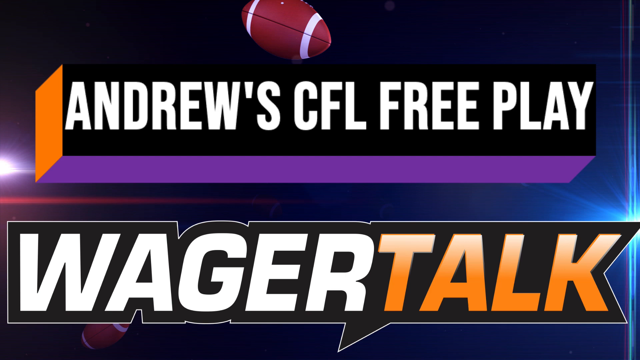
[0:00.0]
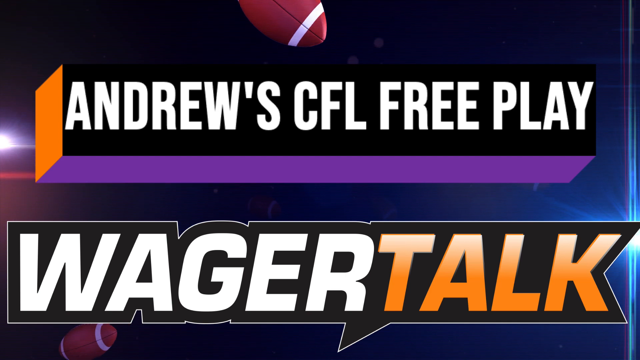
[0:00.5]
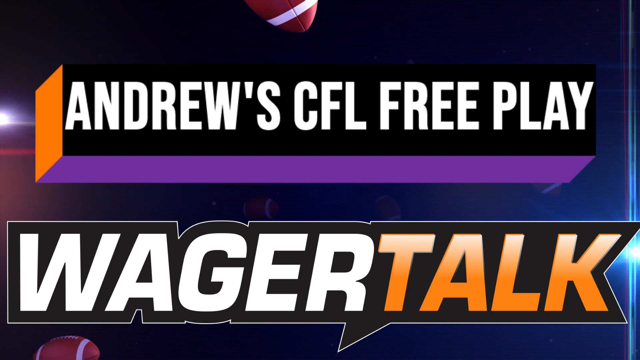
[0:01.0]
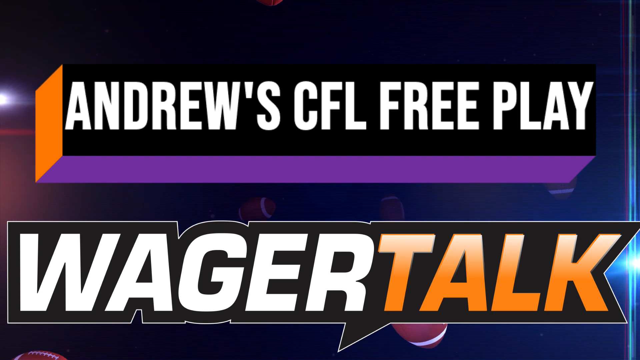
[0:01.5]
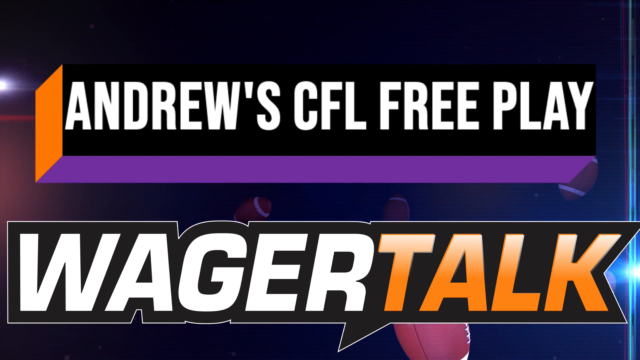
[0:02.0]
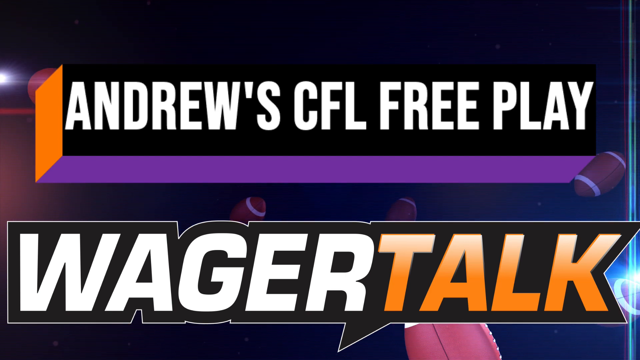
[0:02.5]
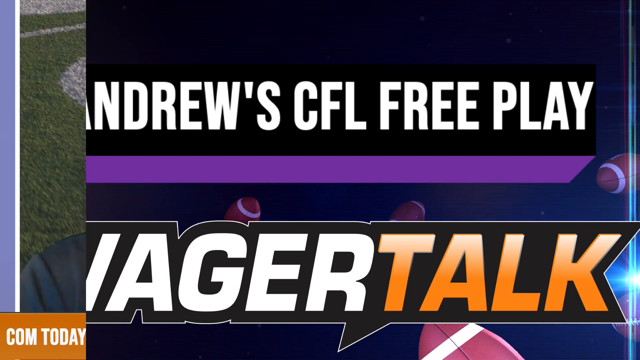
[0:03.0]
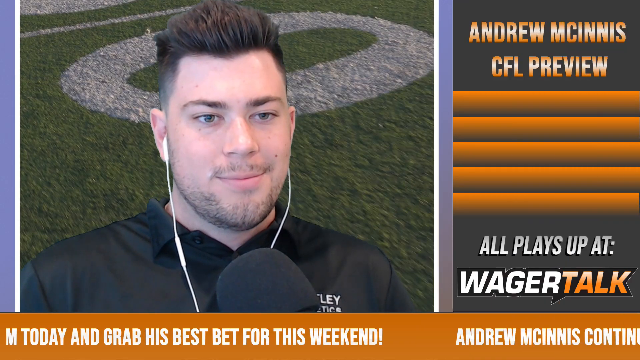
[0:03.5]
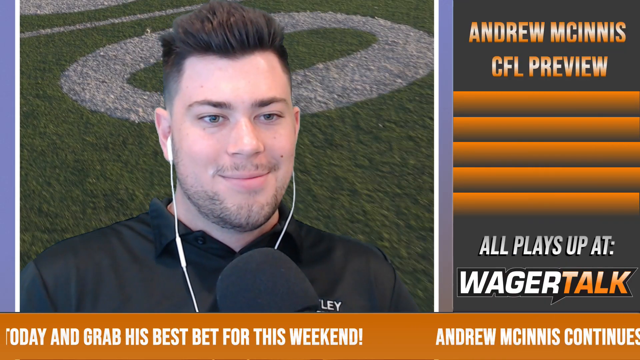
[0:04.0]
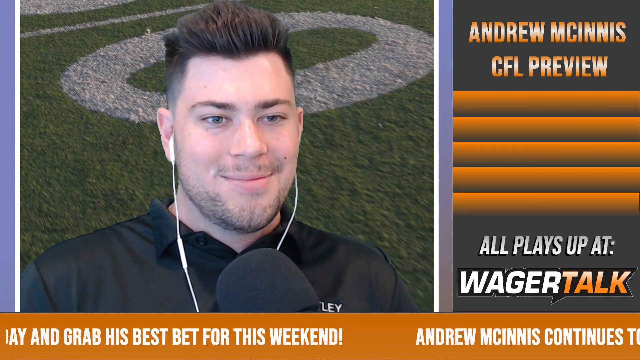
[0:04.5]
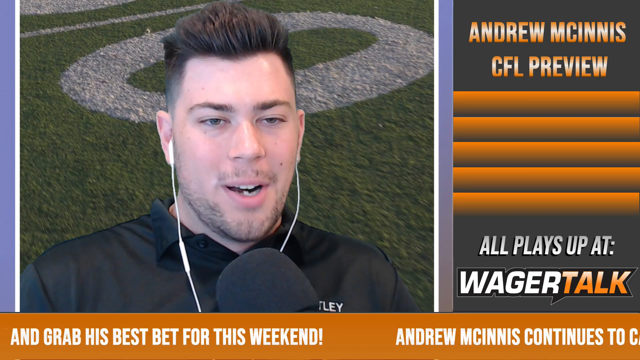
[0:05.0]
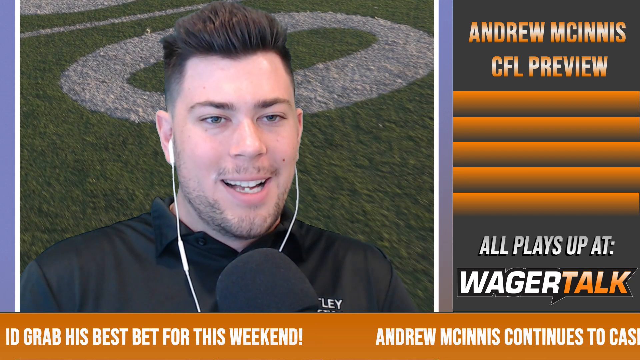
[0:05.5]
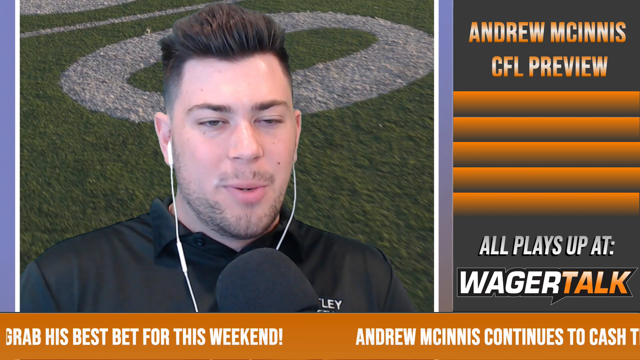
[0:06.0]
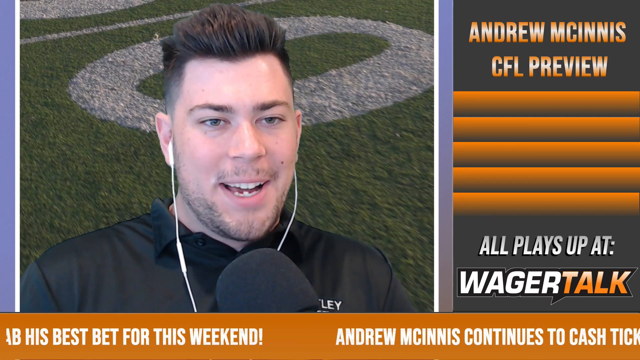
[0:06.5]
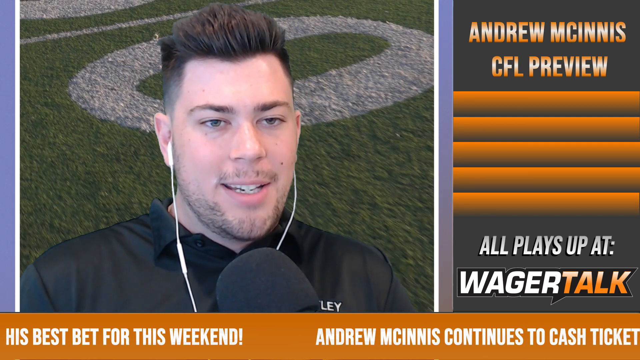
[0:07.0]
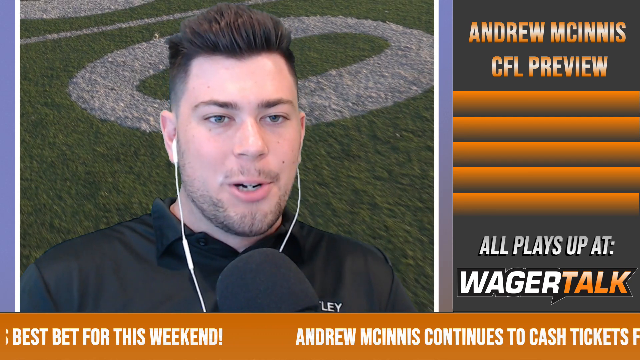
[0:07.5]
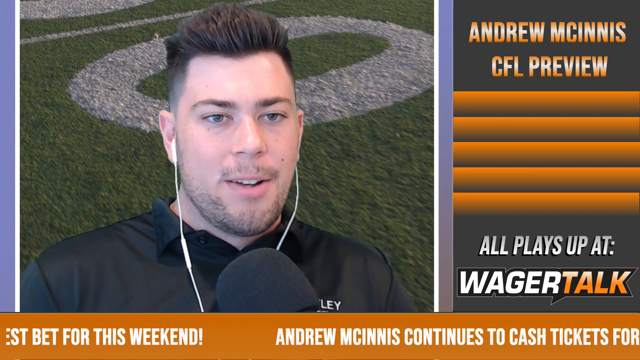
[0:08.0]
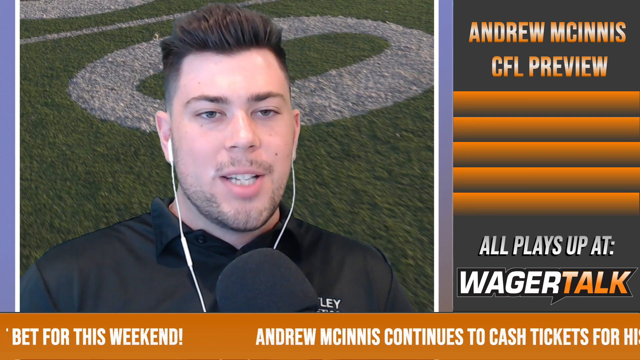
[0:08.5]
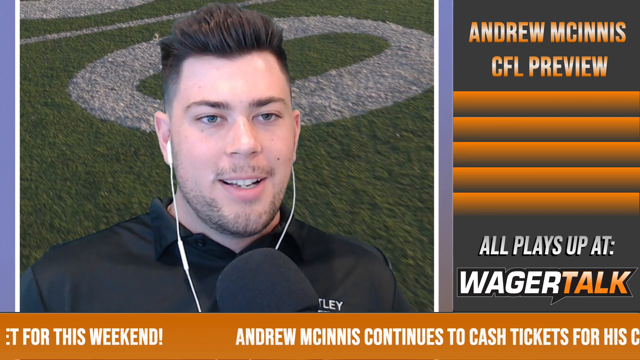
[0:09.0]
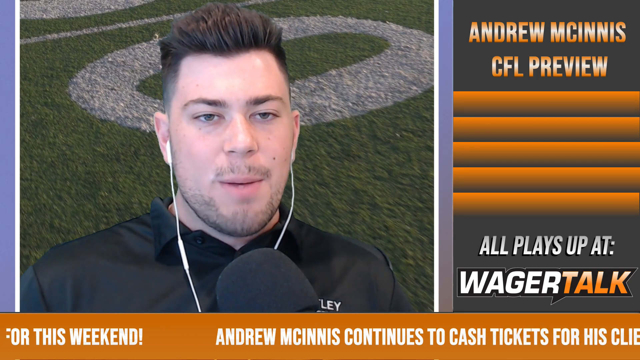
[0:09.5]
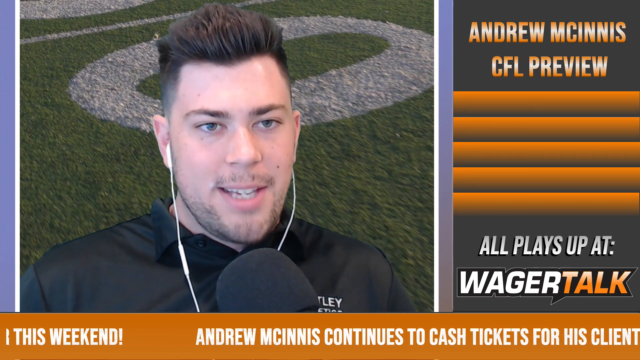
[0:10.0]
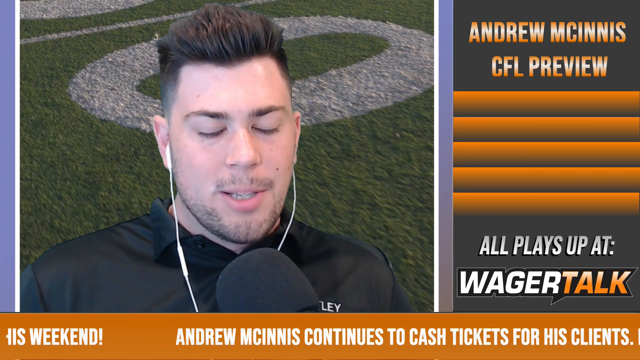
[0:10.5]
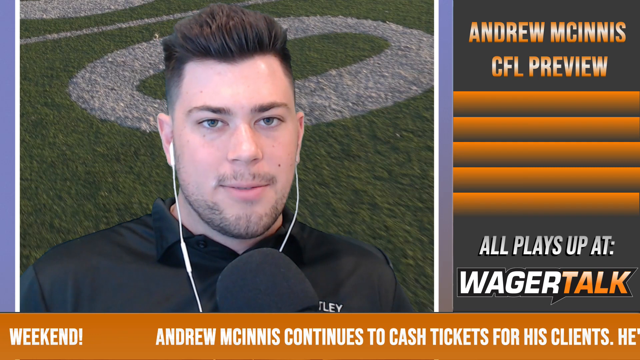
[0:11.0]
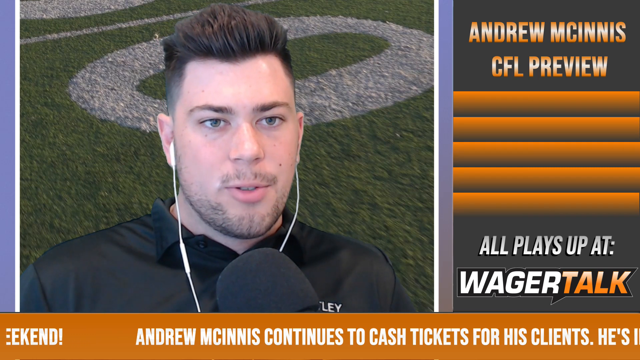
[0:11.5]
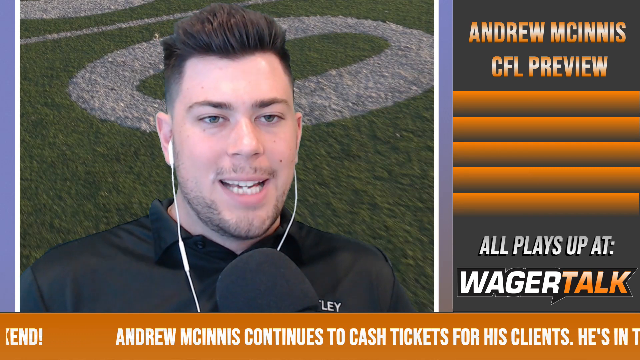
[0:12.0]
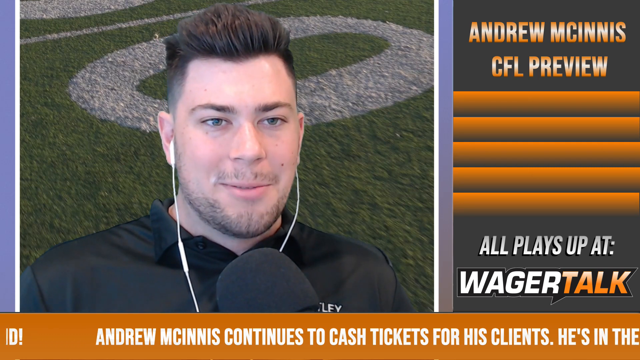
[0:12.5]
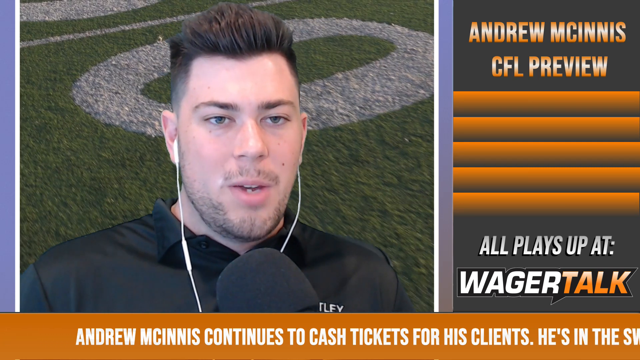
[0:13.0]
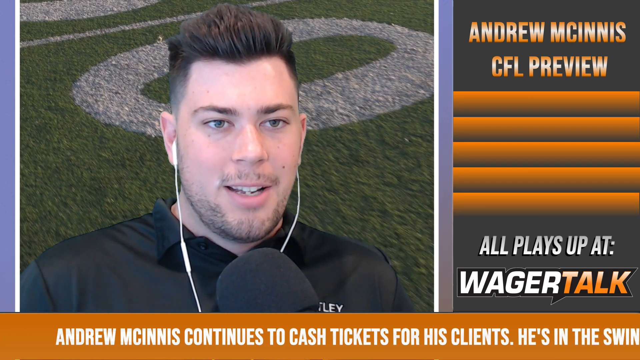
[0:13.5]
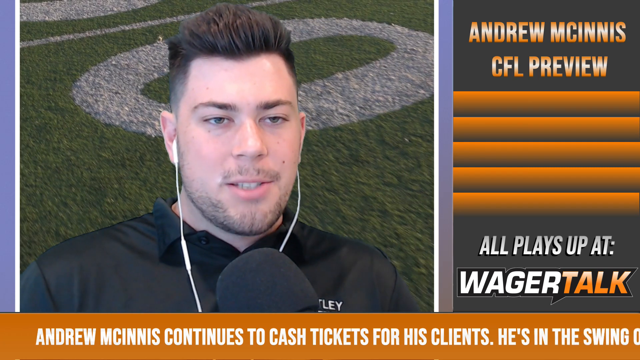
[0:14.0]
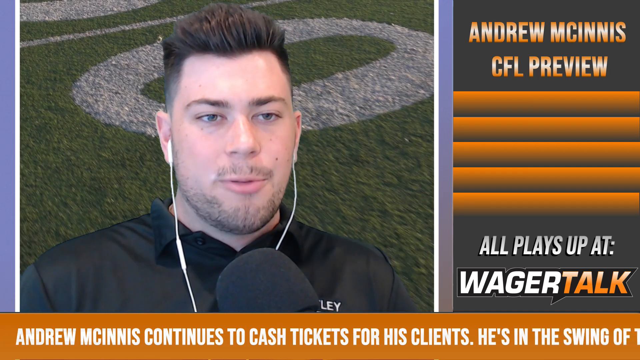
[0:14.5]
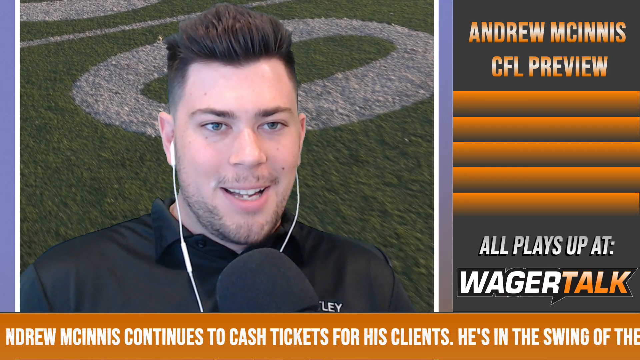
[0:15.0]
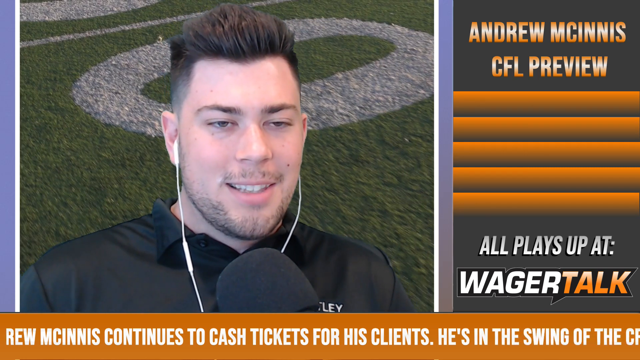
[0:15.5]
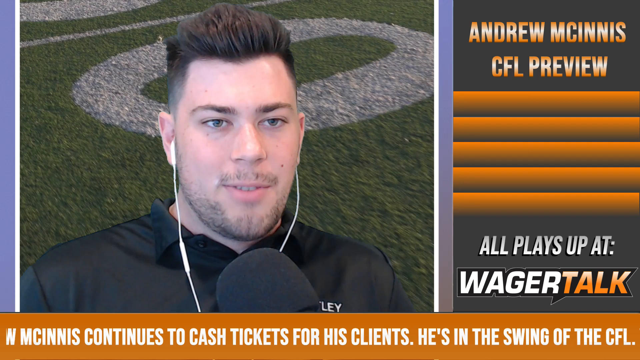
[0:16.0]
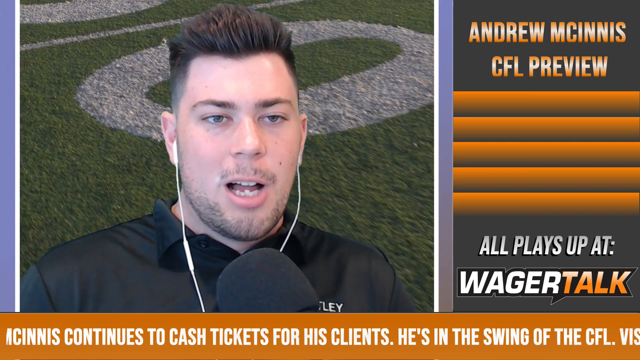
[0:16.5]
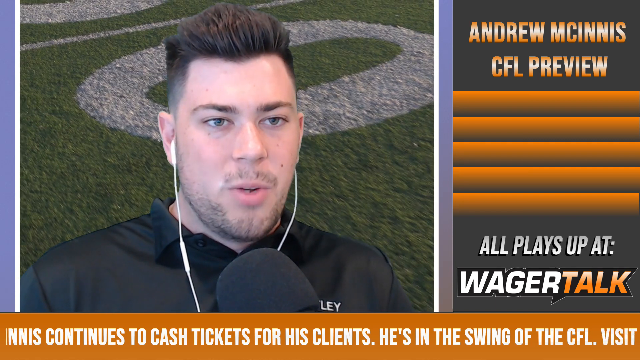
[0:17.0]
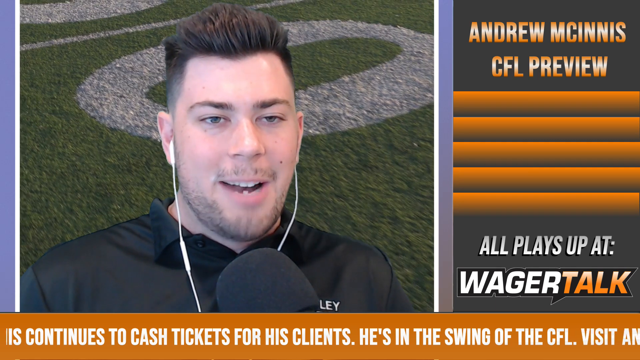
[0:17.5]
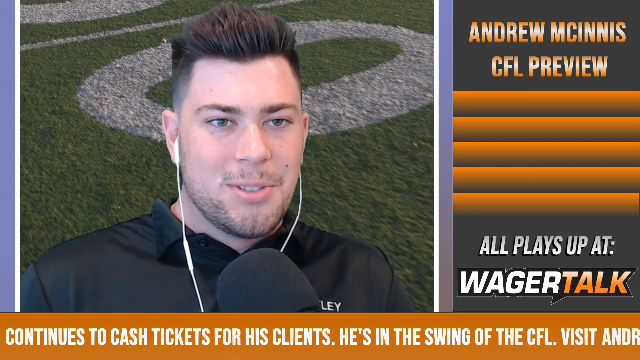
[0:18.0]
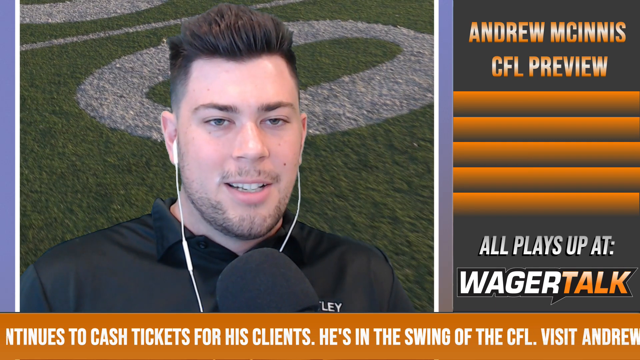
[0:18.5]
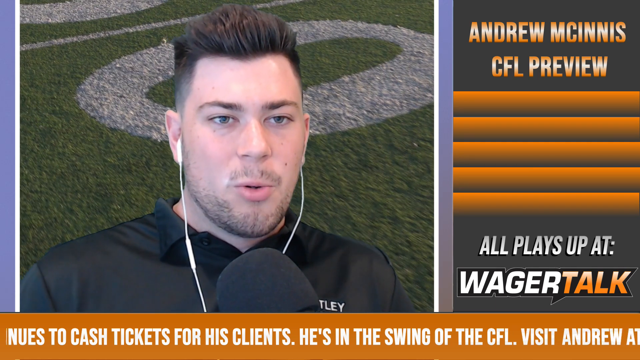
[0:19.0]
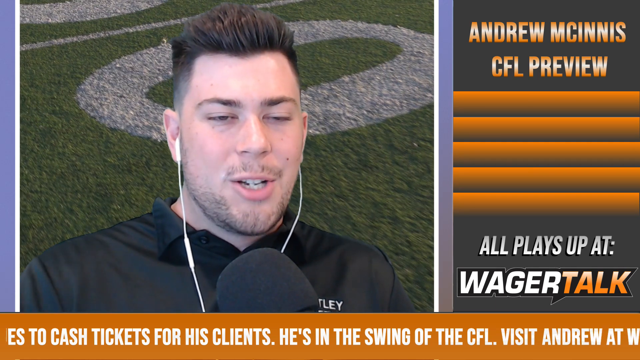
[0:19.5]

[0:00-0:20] The video opens on a purplish blue background with a sunburst effect on the right and left sides. A football appears at the top along with the words "Andrews CFL Free Play" in bold capital letters. Below that it says "wager talk," with "wager" in white and "talk" in orange. The video then shows the ball kind of moving while a bunch of small balls float out of the background. Next, a man is talking. He is white, wears a black polo shirt, and appears to have brown eyes and brown hair. He wears earbuds, and there is a microphone in front of his face. His hair is very short and buzzed on the sides and sticks straight up on top. He has a mole on his right cheek and a stubbly beard. The screen is split, and on the right-hand side it says "Andrew McGinnis CFL Preview" and "all plays up at wager talk." At the very bottom of the screen it says "Andrew McGinnis continues to cash tickets for his clients."